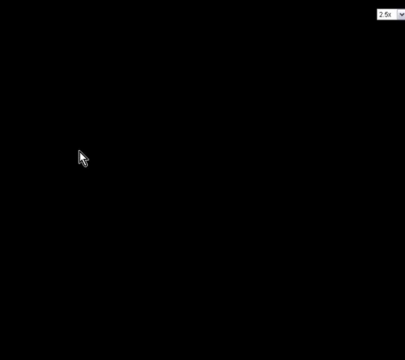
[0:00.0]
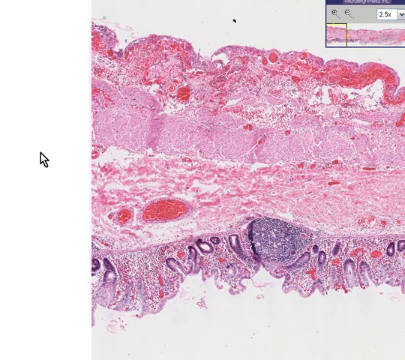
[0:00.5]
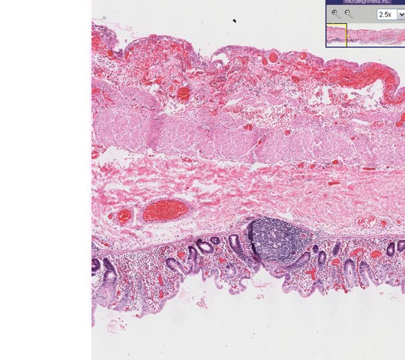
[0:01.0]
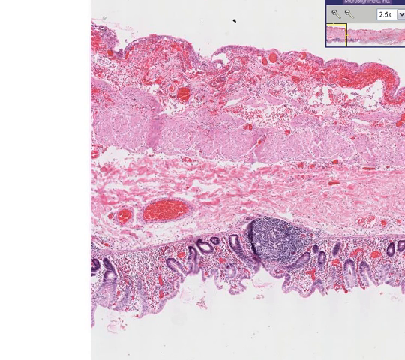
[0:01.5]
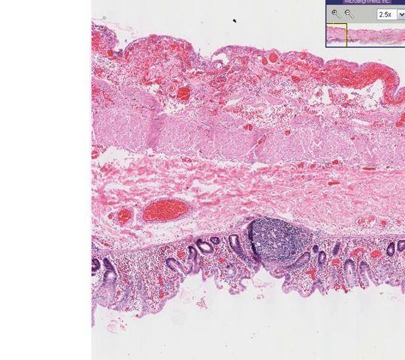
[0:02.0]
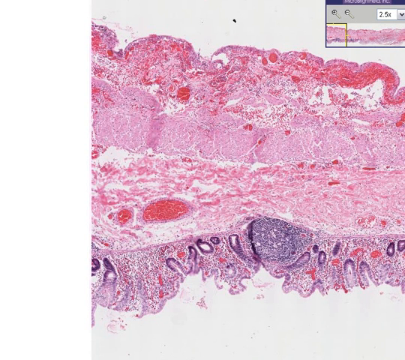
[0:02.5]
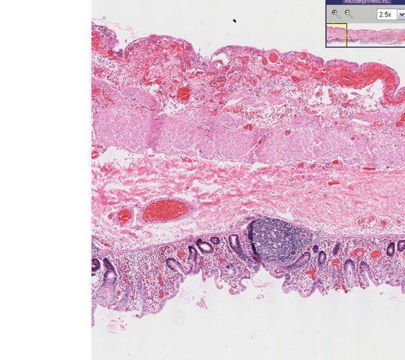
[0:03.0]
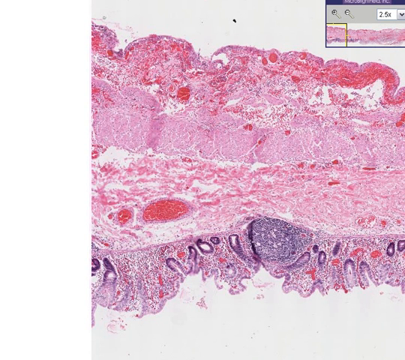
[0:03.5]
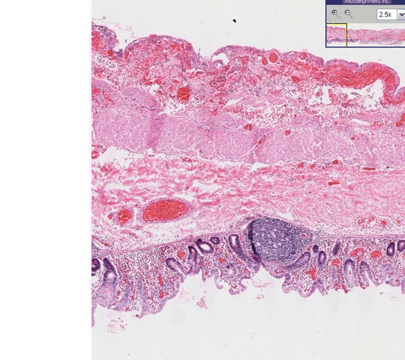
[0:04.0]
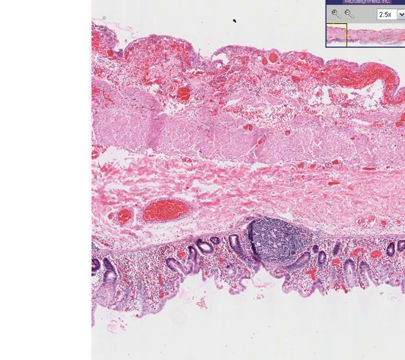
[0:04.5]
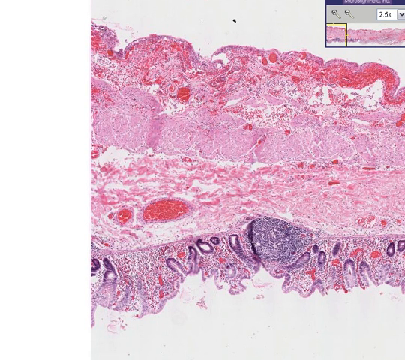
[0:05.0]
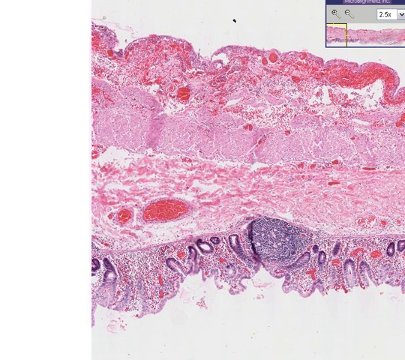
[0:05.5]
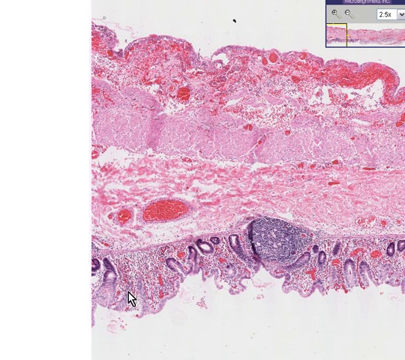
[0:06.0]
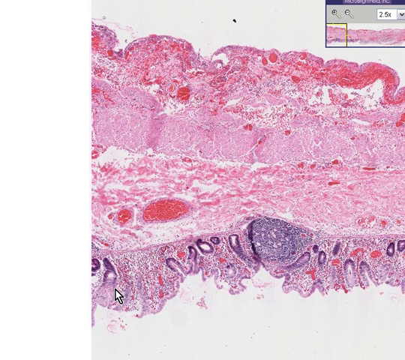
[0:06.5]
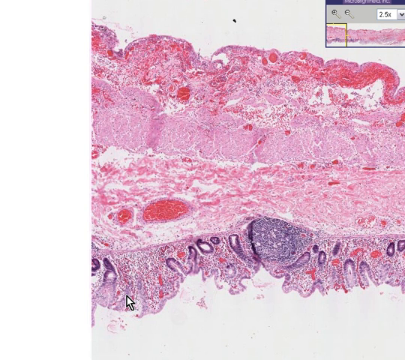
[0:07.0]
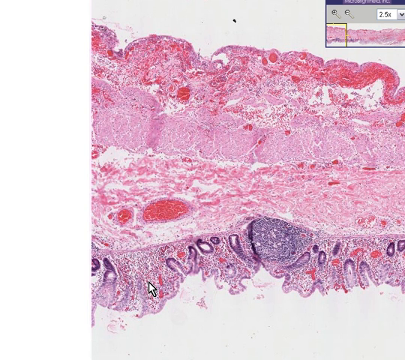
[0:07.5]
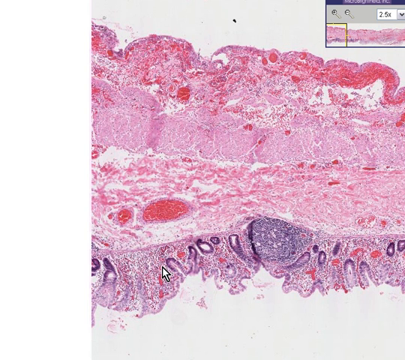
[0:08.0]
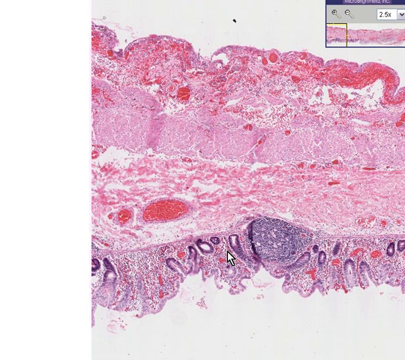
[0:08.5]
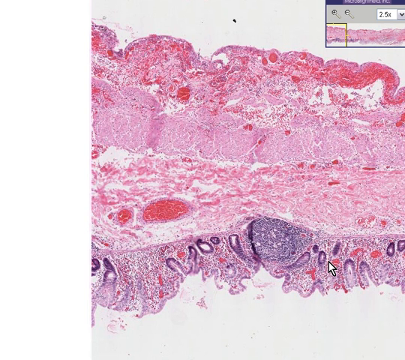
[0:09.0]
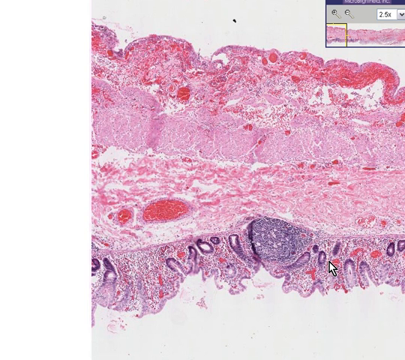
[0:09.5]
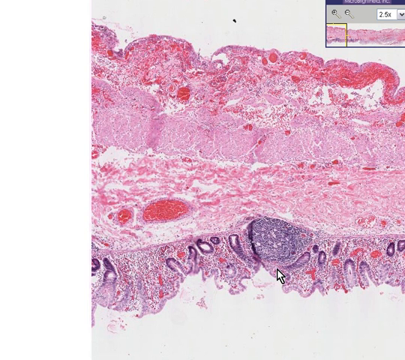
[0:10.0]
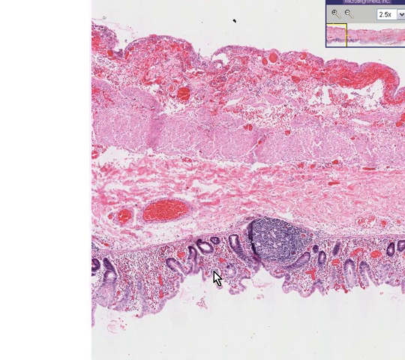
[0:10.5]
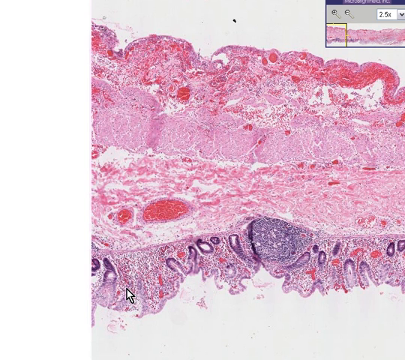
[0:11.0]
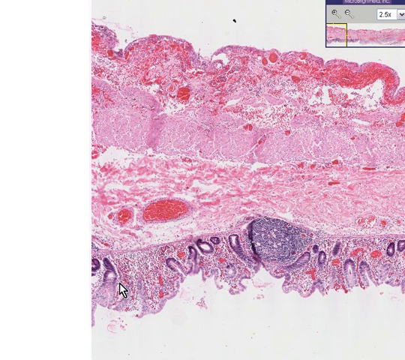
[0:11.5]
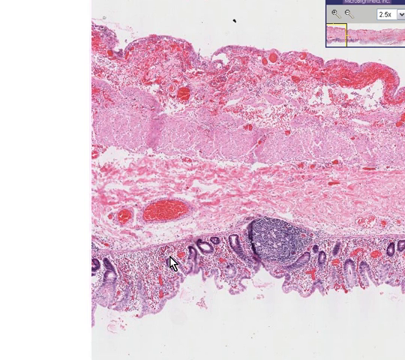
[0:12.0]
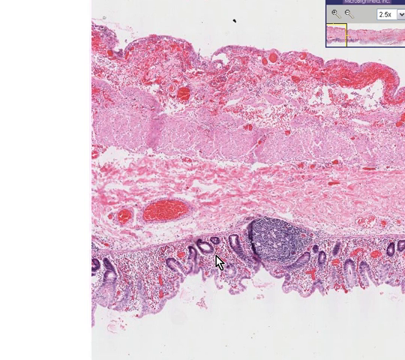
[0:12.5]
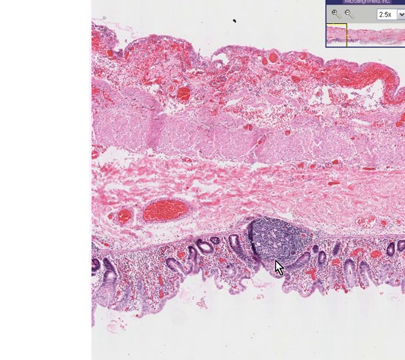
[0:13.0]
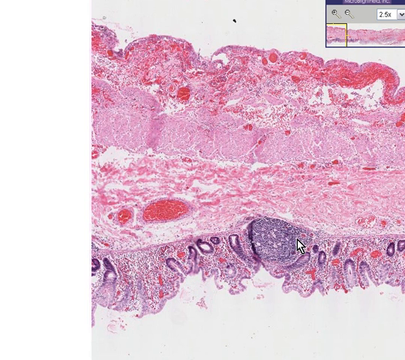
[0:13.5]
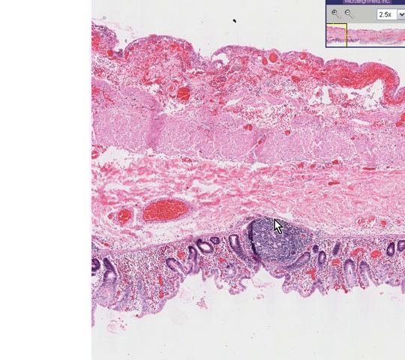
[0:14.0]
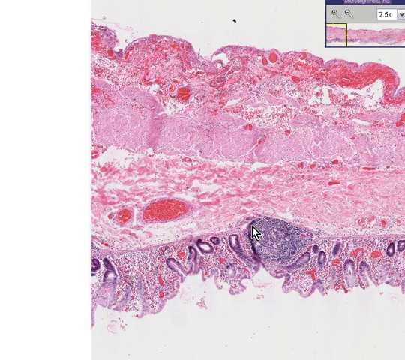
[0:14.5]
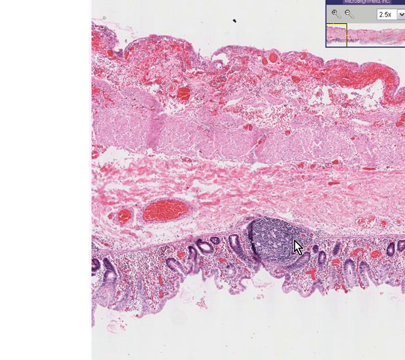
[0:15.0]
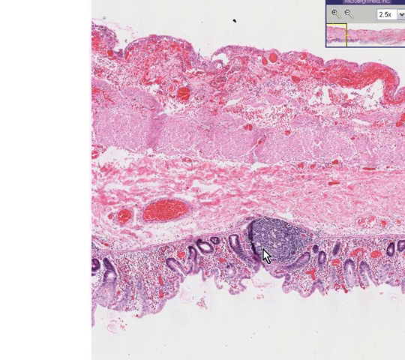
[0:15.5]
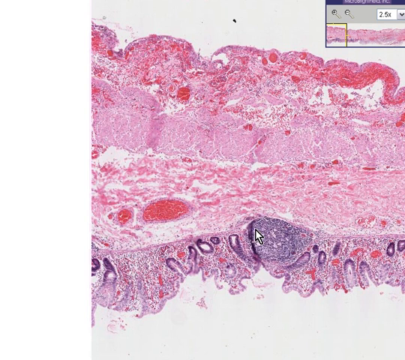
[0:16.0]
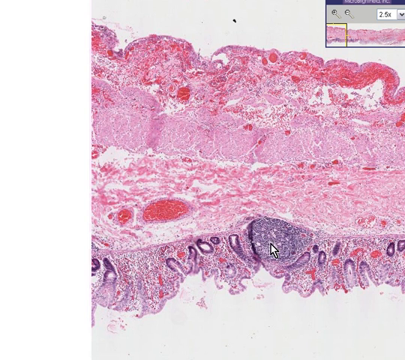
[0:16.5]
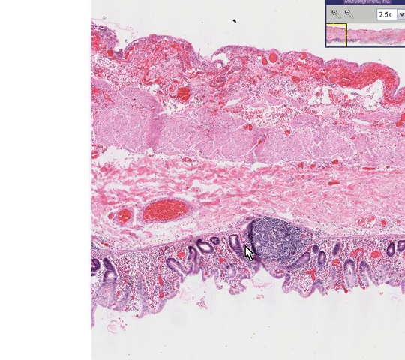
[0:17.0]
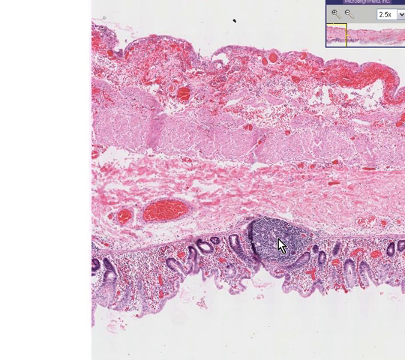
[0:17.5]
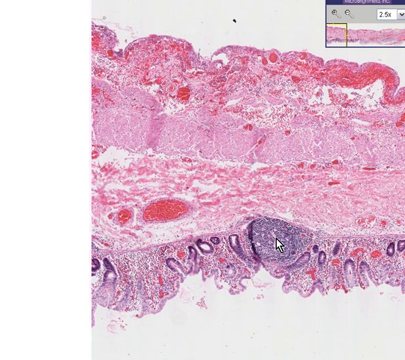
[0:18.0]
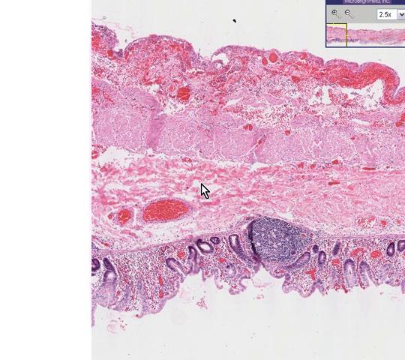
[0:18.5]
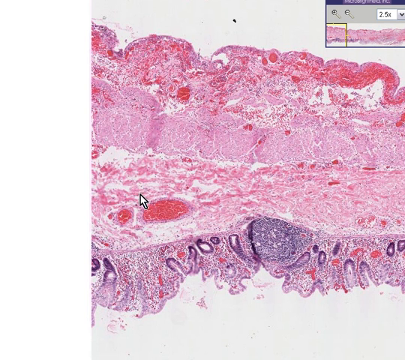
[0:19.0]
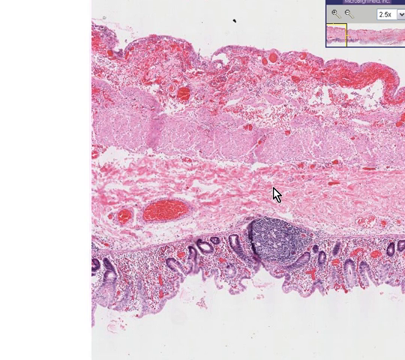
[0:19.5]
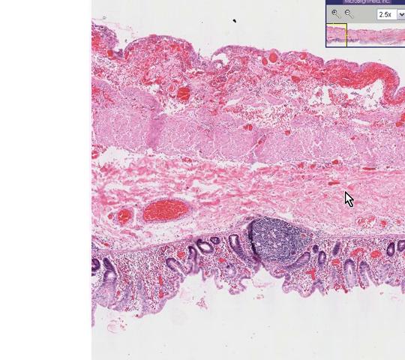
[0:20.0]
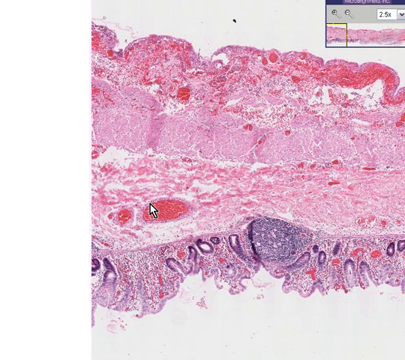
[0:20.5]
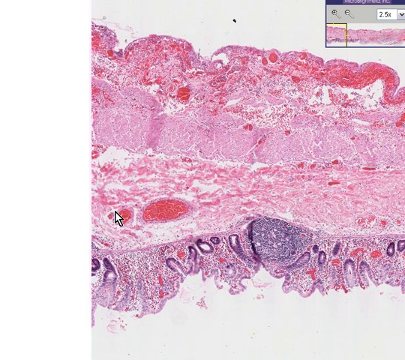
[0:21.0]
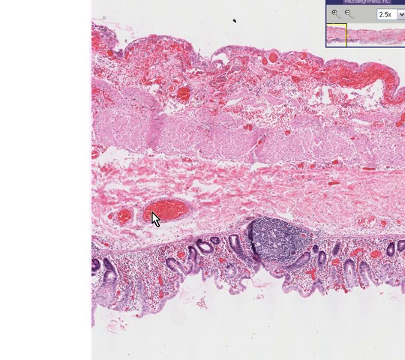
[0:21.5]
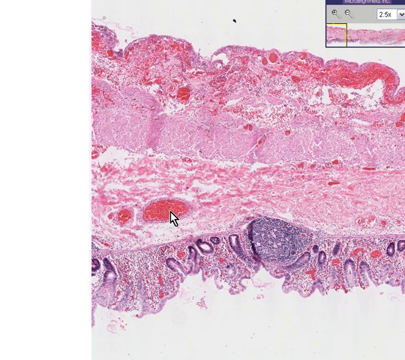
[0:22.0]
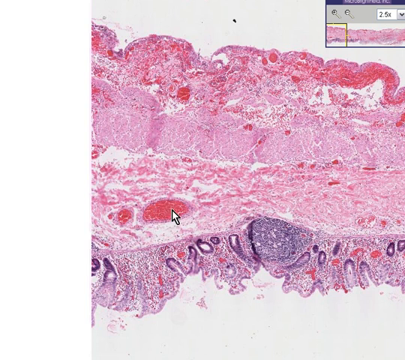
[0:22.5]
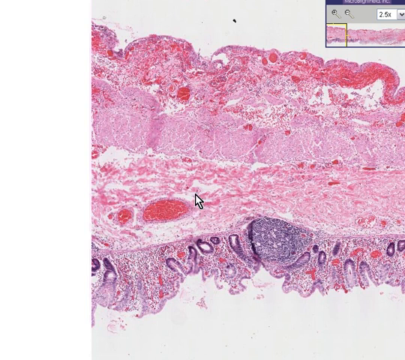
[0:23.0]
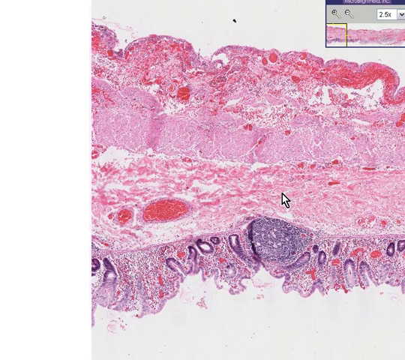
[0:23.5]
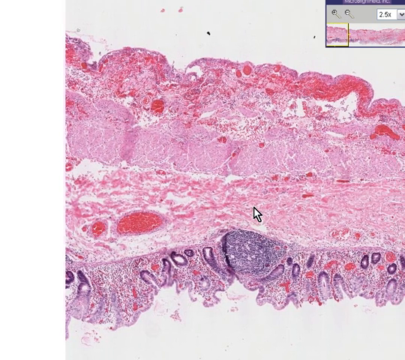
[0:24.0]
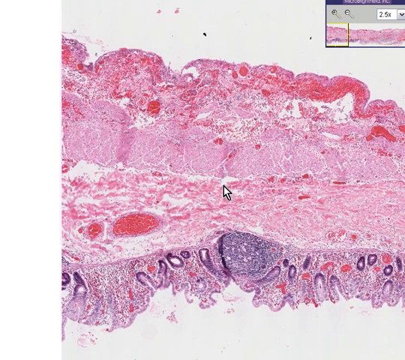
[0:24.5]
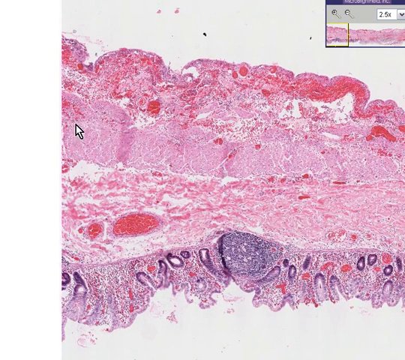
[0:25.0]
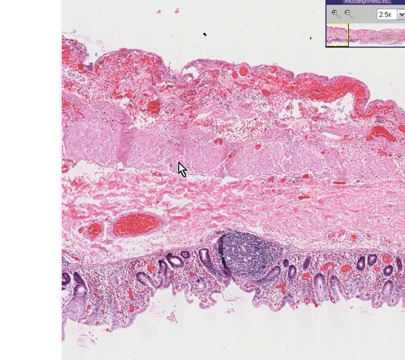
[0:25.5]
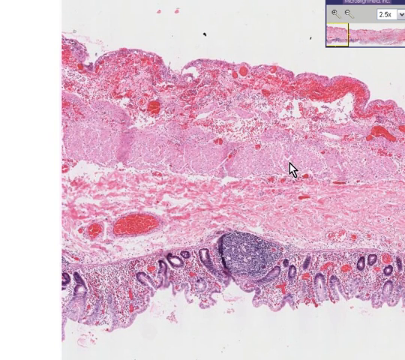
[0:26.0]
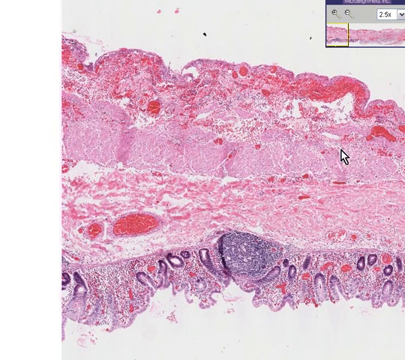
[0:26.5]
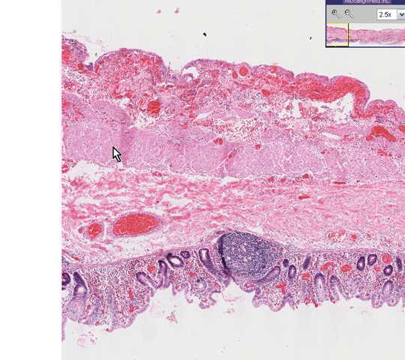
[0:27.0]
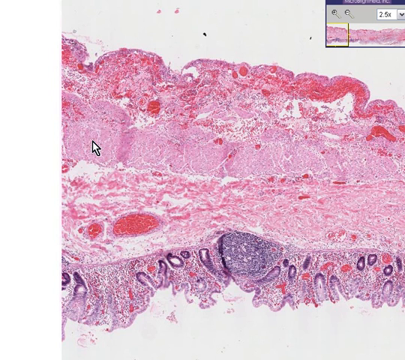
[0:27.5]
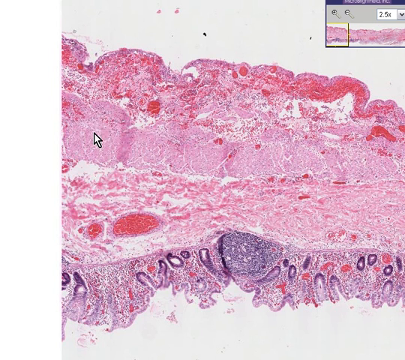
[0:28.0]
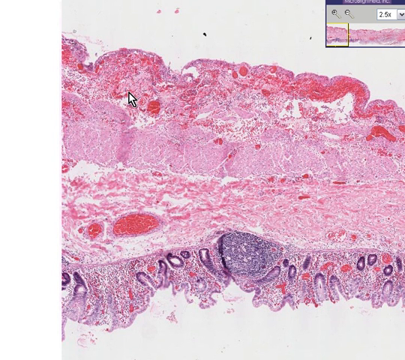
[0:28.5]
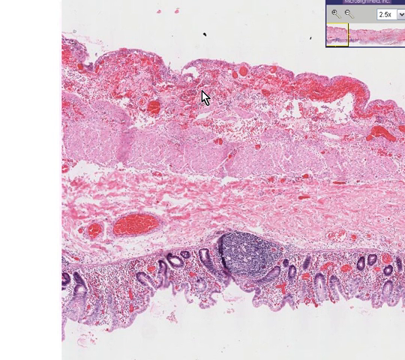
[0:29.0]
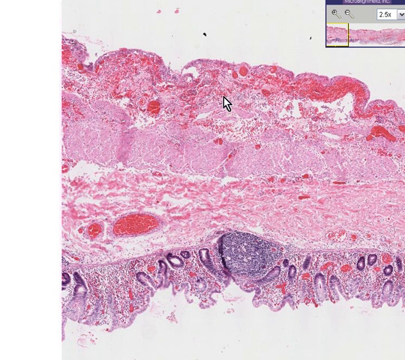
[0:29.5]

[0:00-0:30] The video begins with a black screen that looks like it may be a computer screen, since a mouse cursor is on it. It then switches to a screen that looks like something is being colored or painted. The image is pink and purple and sort of looks like a cellular structure. The cursor goes over the pink and purple parts at the bottom of the screen and surrounds a part that is sort of circular and purple with pink dots in it. It then moves to the next layer, showing dark pink parts, and scrolls over to the next layer, which is light pink and sort of looks like a cliff, hovering over it. The cursor moves up toward the top for a little bit and stops.